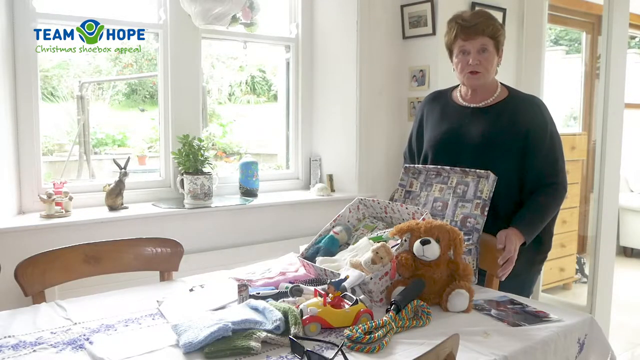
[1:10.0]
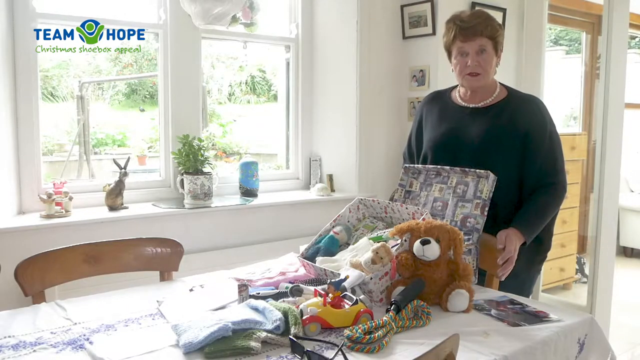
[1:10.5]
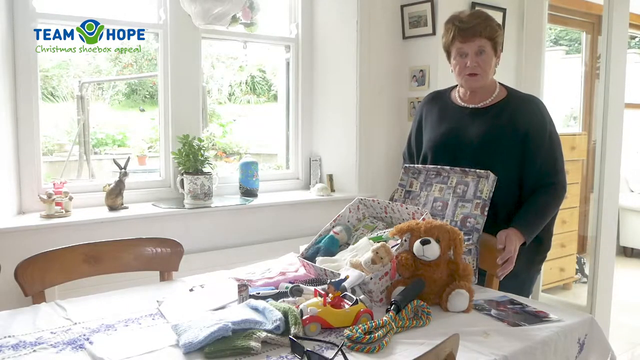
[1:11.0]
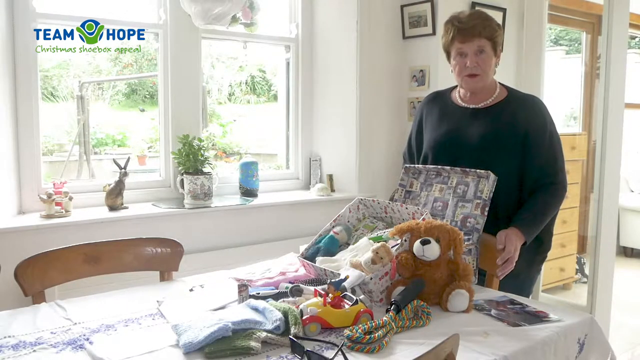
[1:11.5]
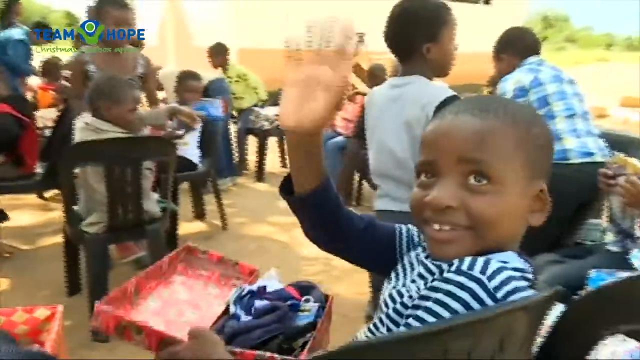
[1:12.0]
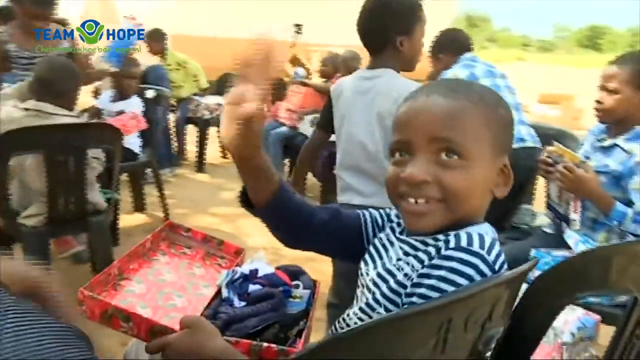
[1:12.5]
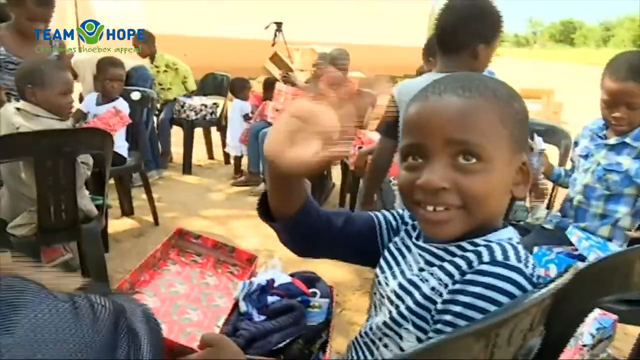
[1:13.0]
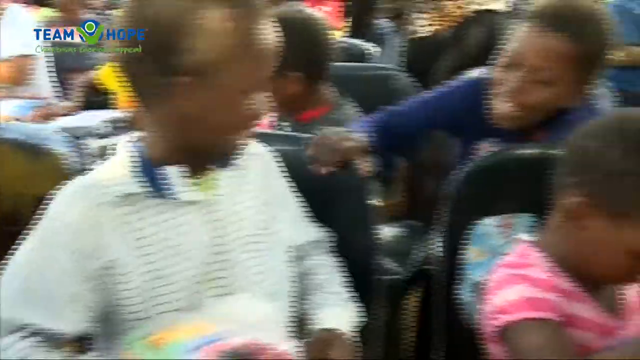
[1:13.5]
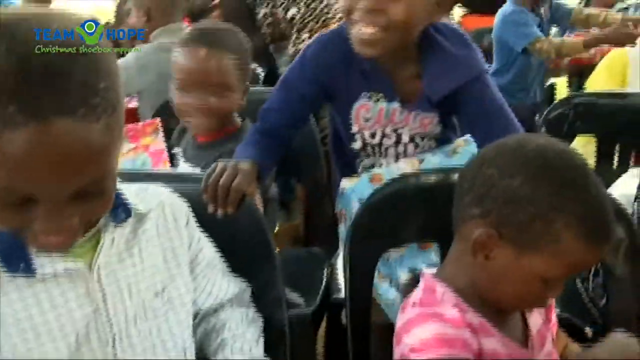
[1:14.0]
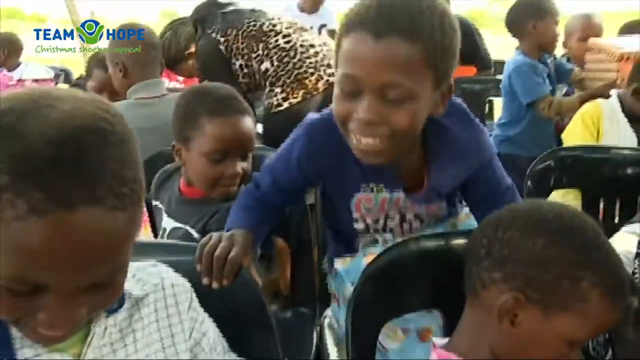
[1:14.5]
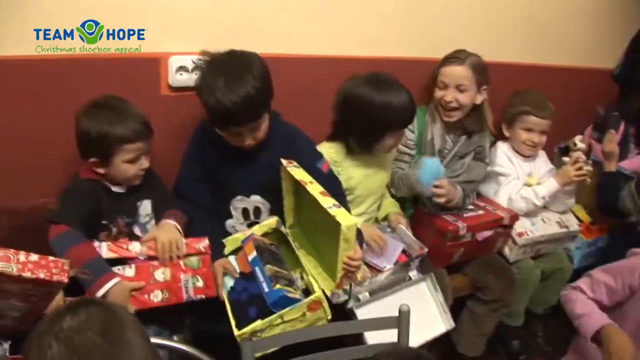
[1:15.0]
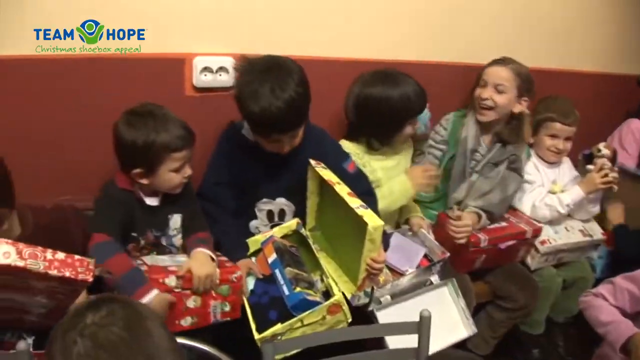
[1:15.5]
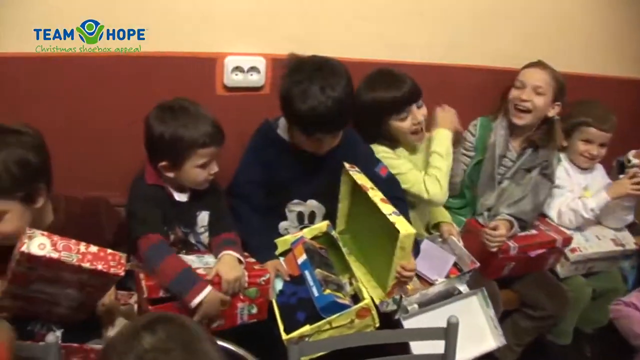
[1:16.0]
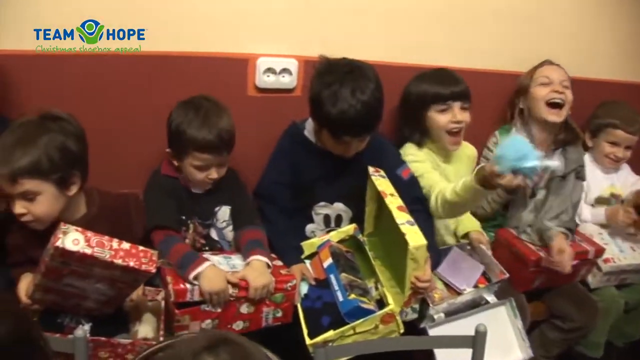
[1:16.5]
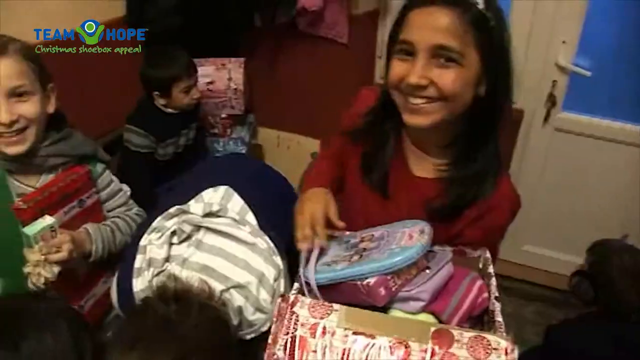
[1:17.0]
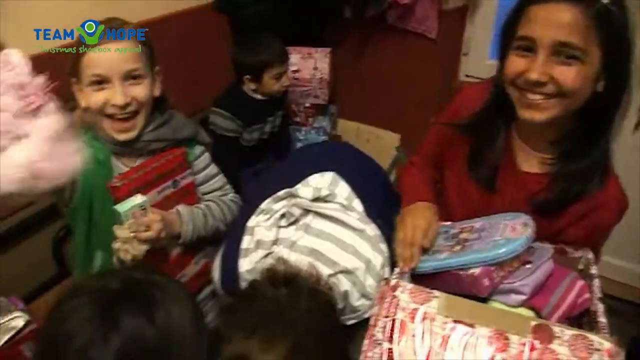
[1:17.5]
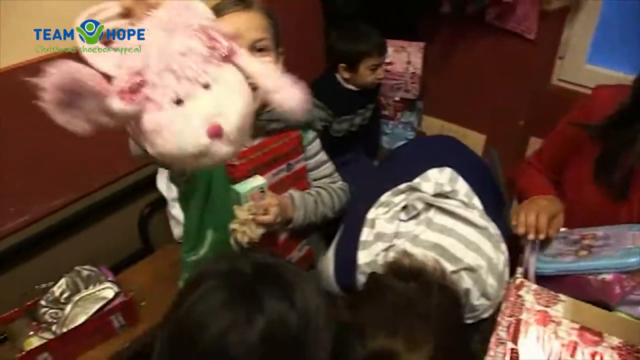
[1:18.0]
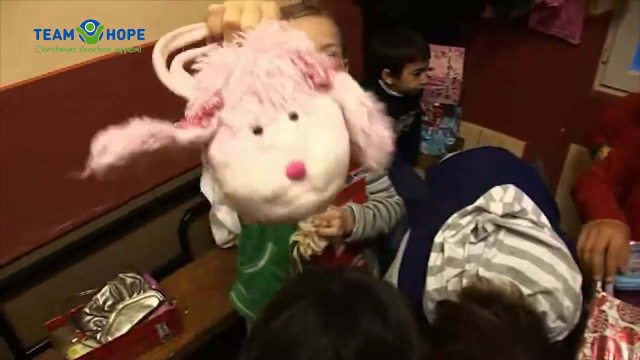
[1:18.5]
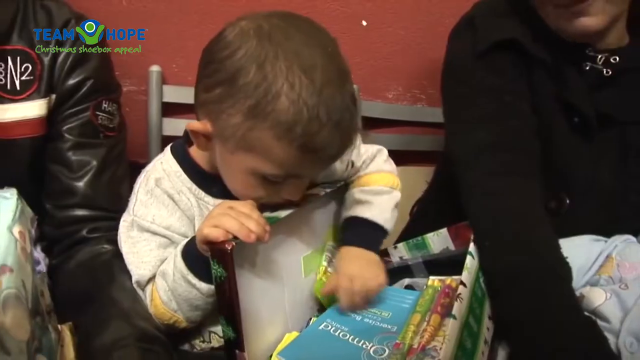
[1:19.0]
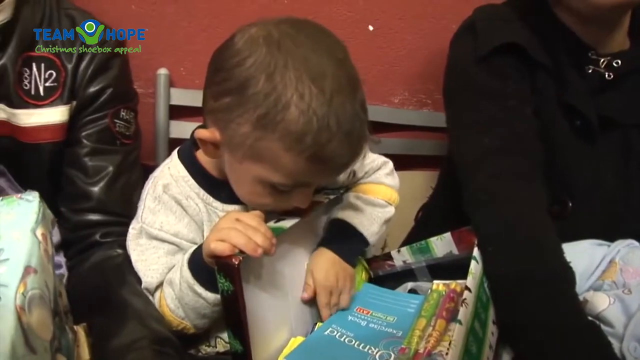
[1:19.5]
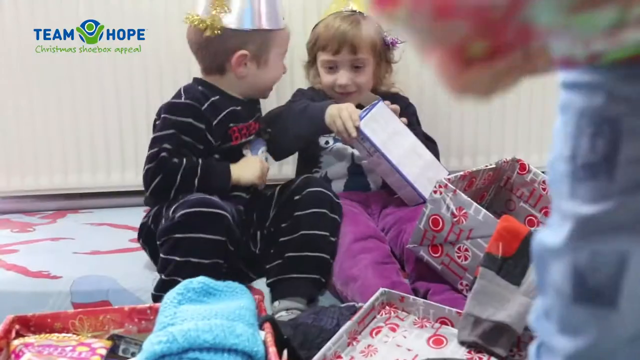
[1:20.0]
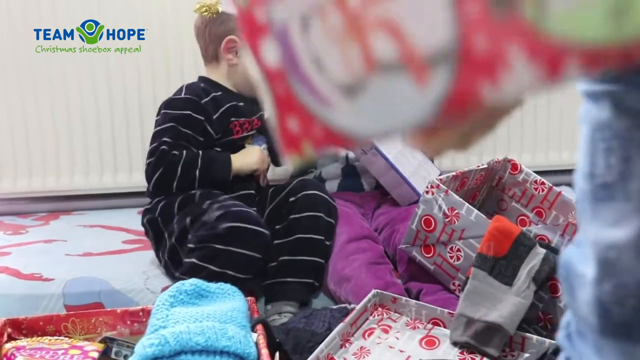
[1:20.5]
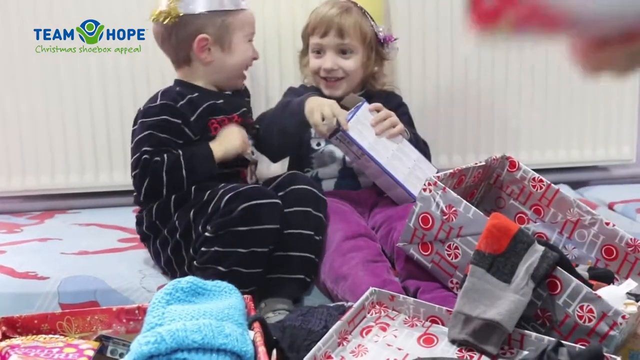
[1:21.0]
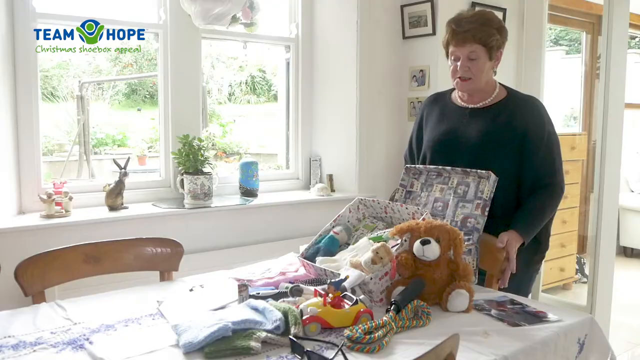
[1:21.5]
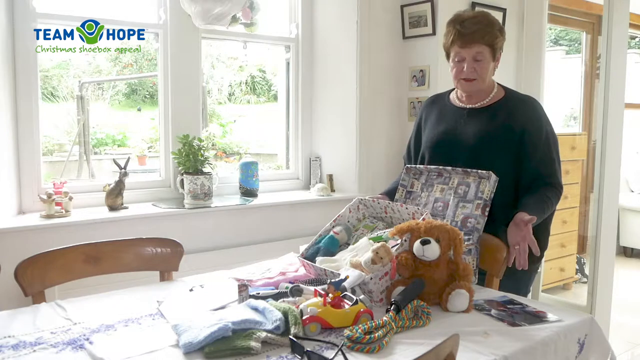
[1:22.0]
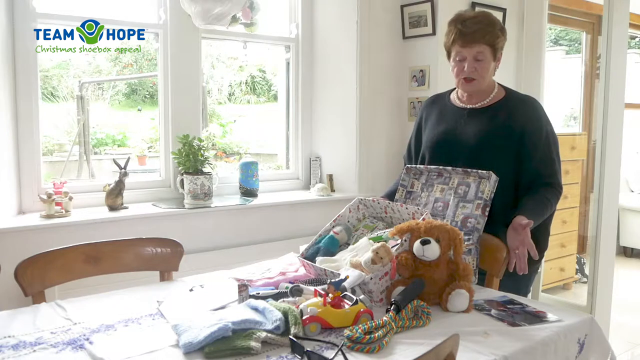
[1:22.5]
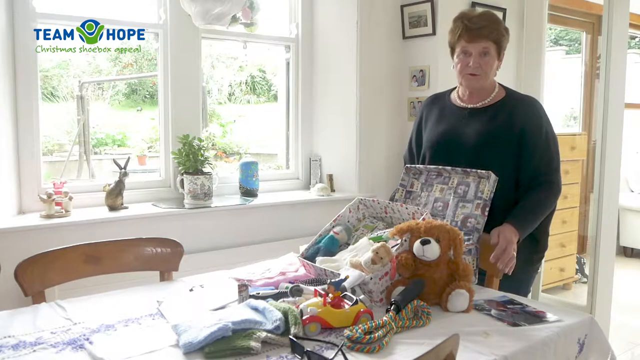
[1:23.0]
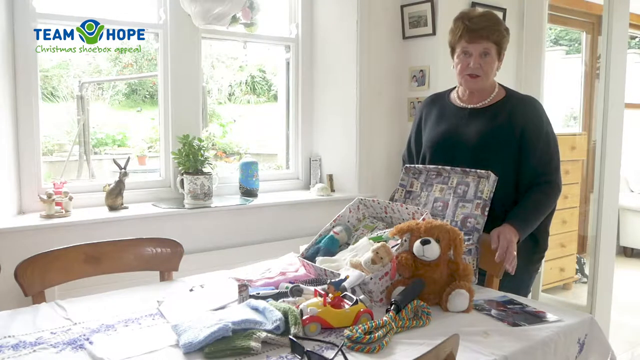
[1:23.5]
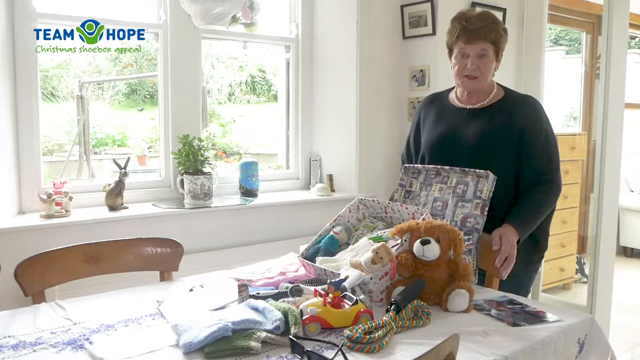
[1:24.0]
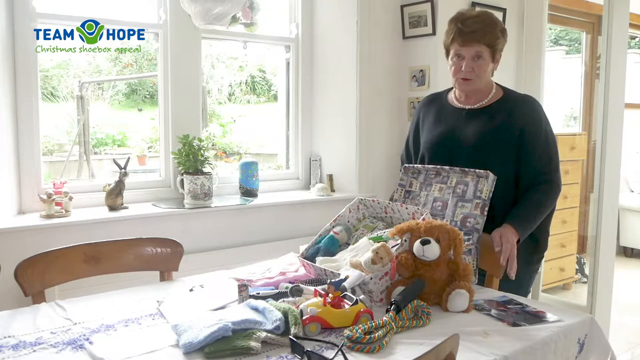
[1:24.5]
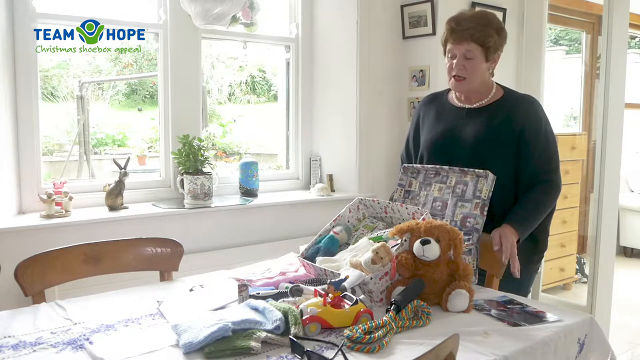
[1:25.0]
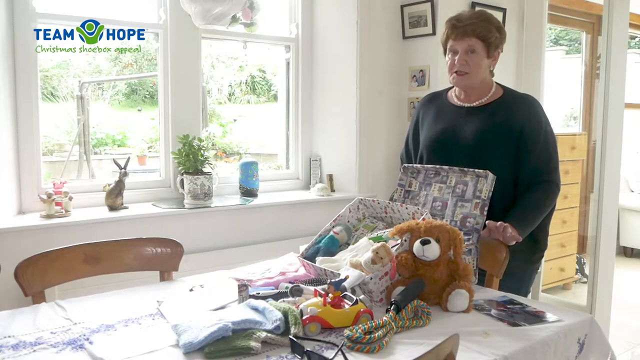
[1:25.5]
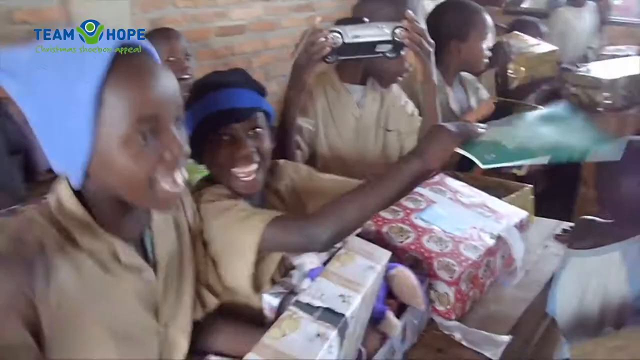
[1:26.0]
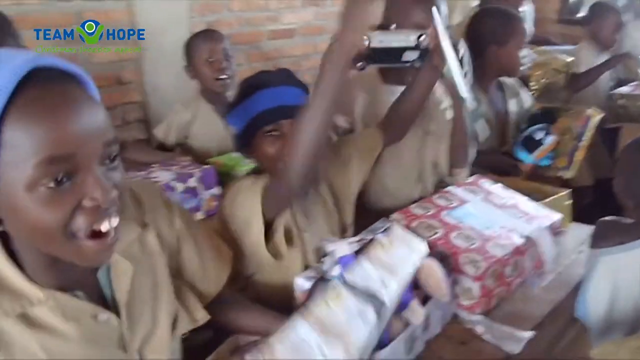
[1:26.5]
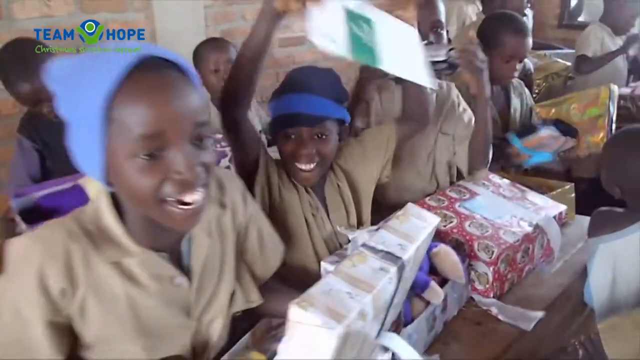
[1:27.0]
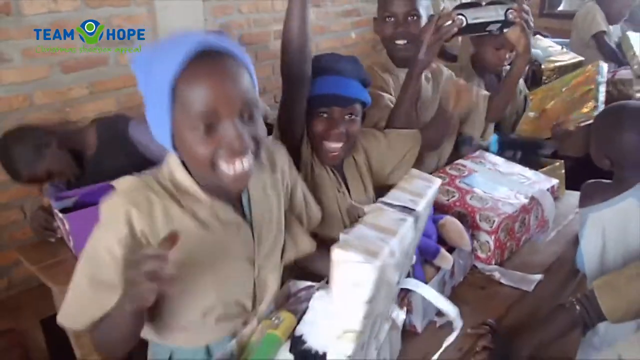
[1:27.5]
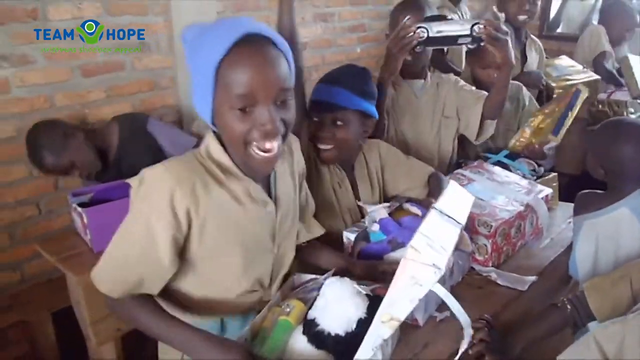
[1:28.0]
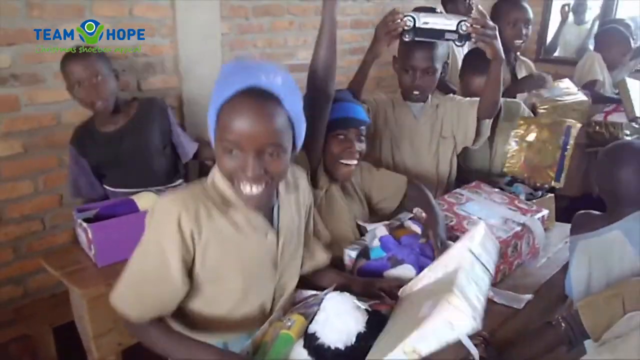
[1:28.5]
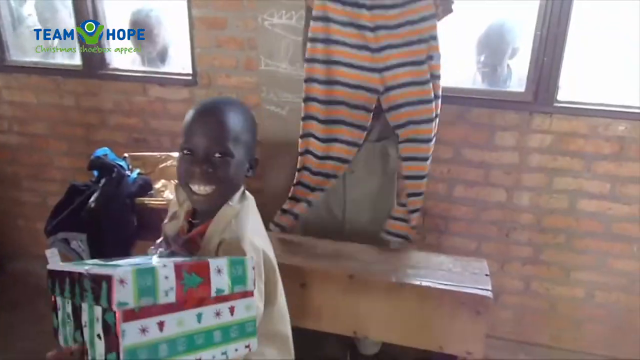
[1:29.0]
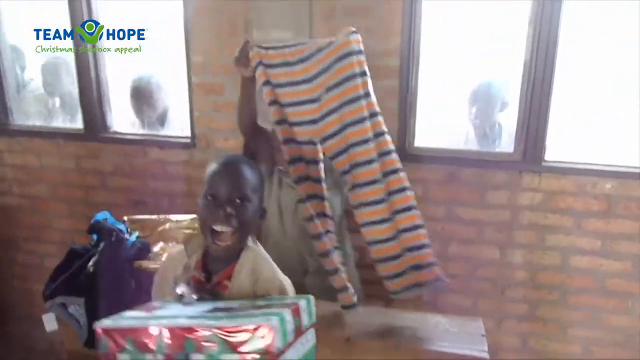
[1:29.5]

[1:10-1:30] Different scenes show children opening their shoeboxes and being very joyful. The video returns to the woman talking at the table, then to children in third-world countries opening boxes. The woman, Sally, is an older woman standing in her dining room at one end of a table, with a box in front of her and the items for the box sprawled out on the table.